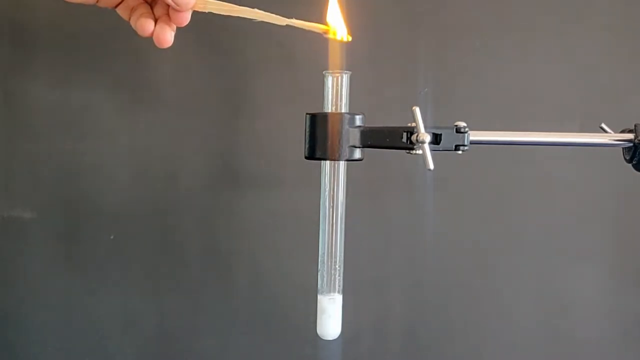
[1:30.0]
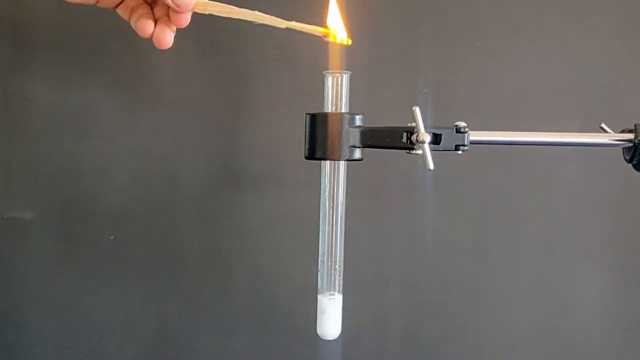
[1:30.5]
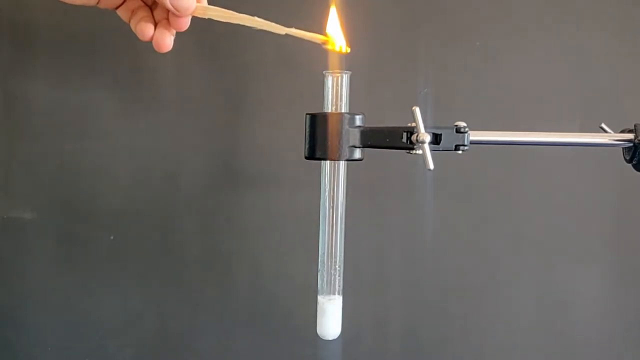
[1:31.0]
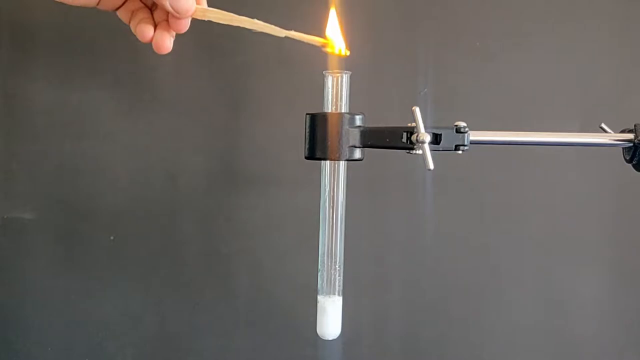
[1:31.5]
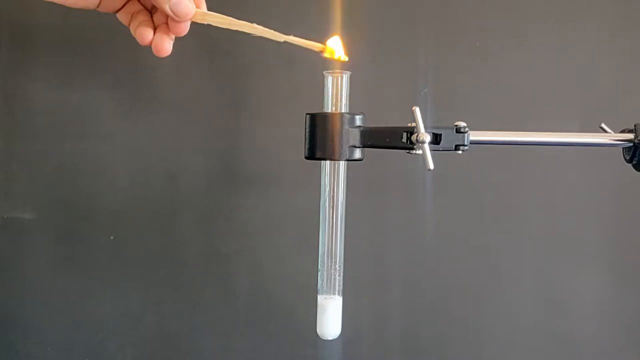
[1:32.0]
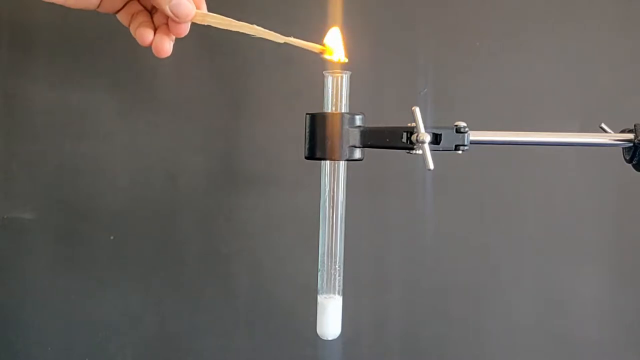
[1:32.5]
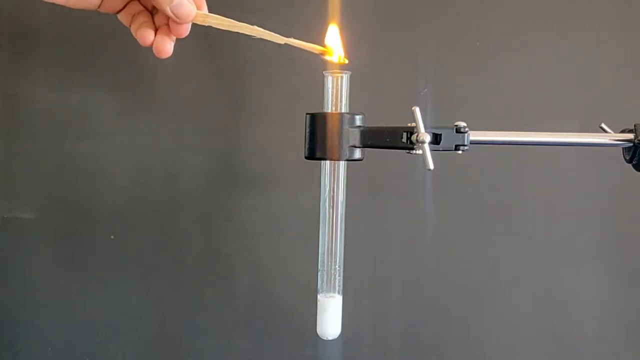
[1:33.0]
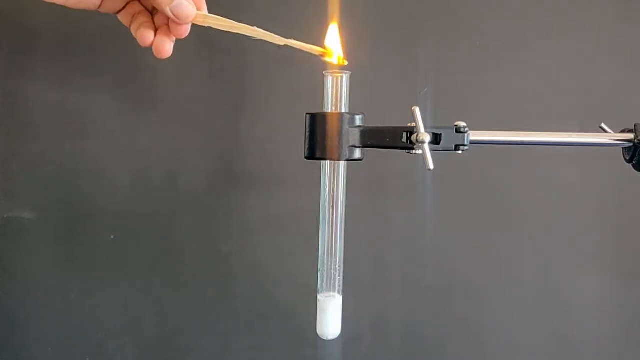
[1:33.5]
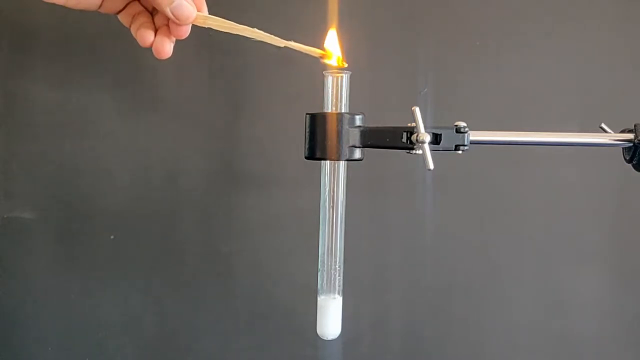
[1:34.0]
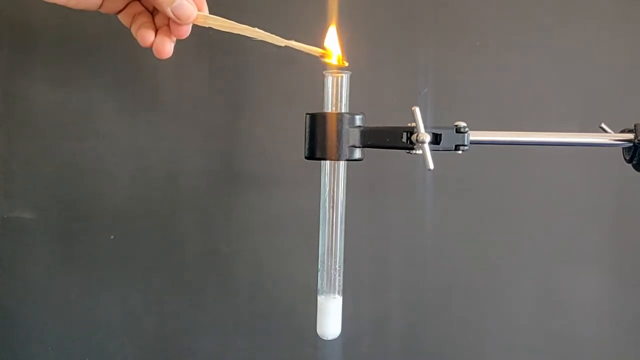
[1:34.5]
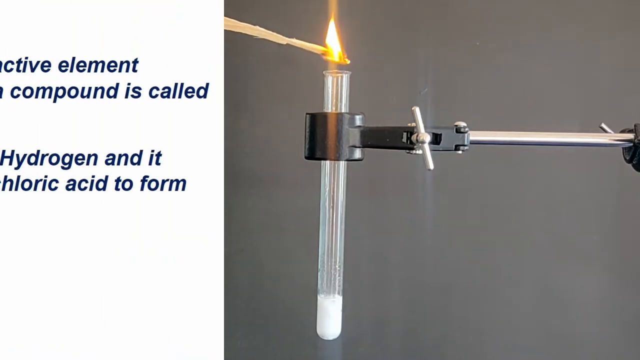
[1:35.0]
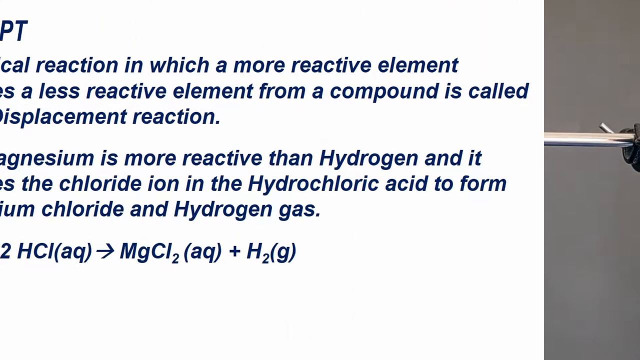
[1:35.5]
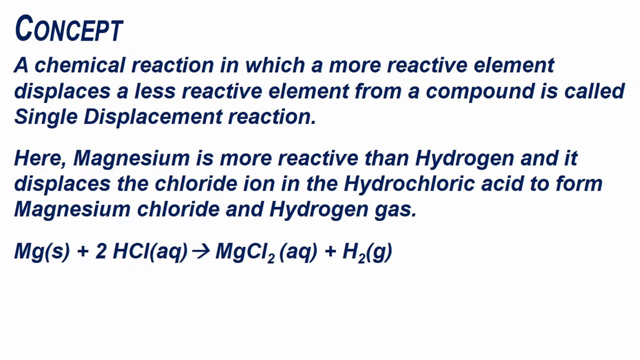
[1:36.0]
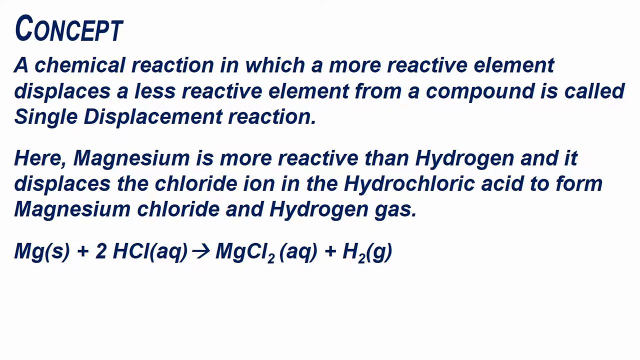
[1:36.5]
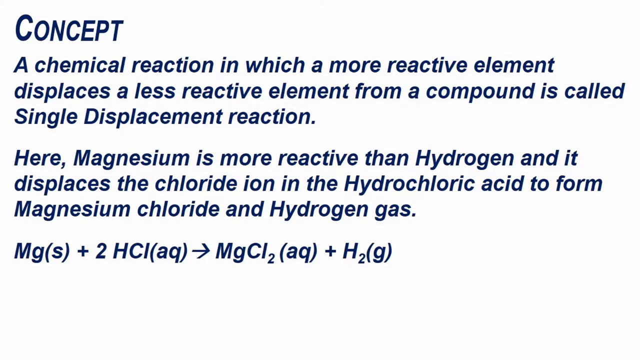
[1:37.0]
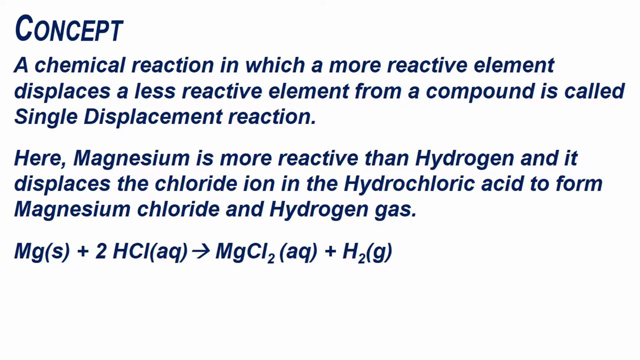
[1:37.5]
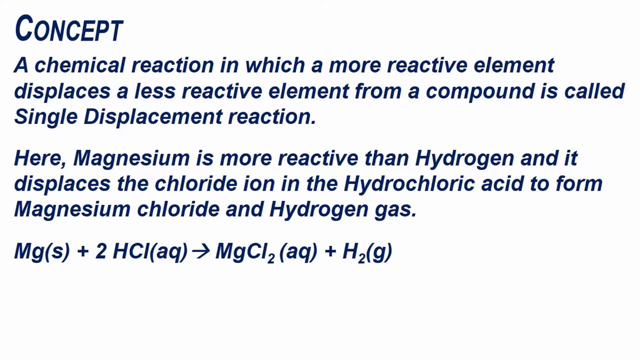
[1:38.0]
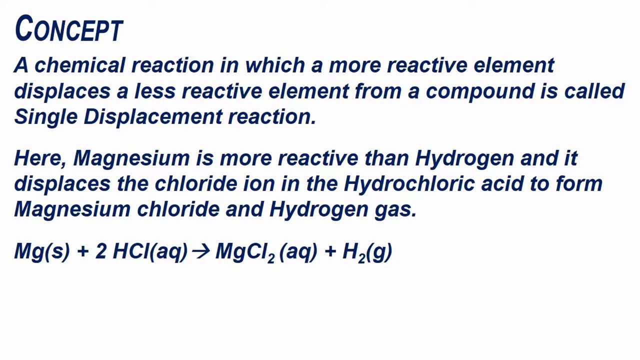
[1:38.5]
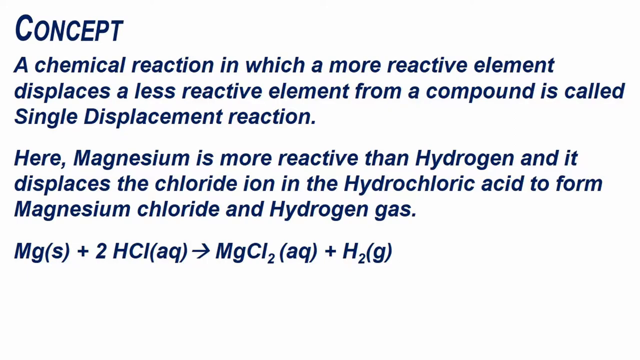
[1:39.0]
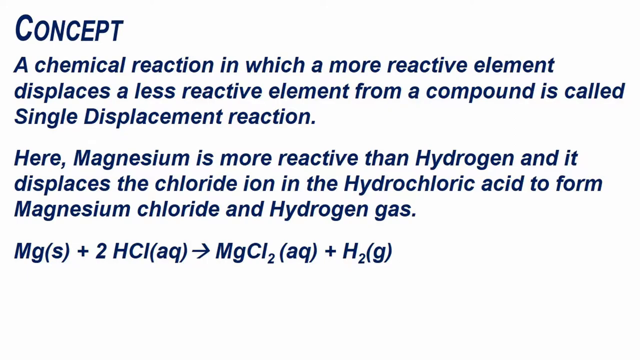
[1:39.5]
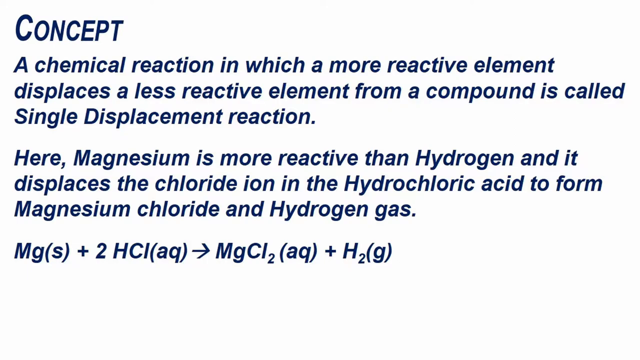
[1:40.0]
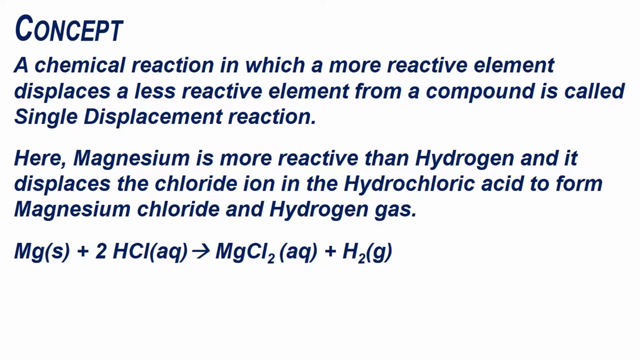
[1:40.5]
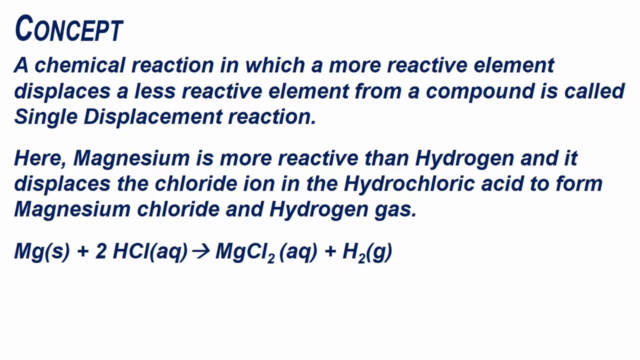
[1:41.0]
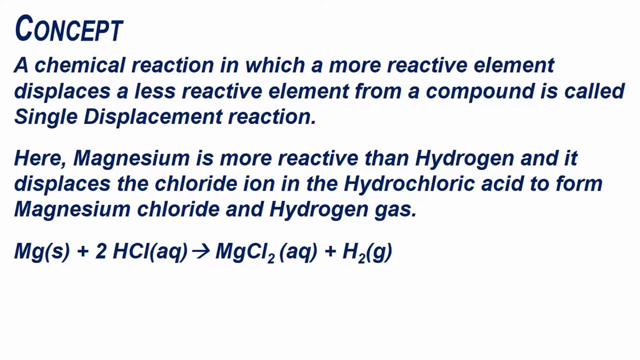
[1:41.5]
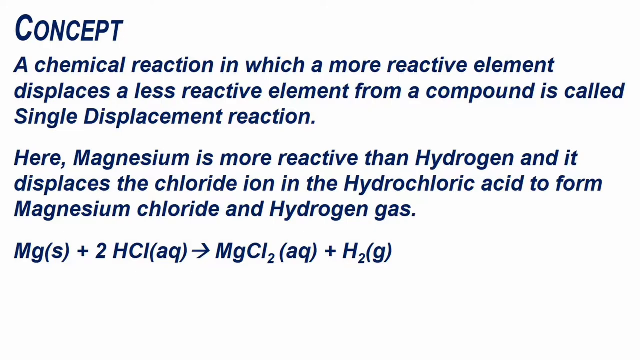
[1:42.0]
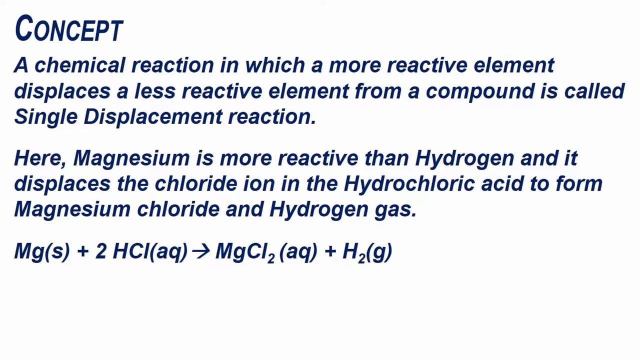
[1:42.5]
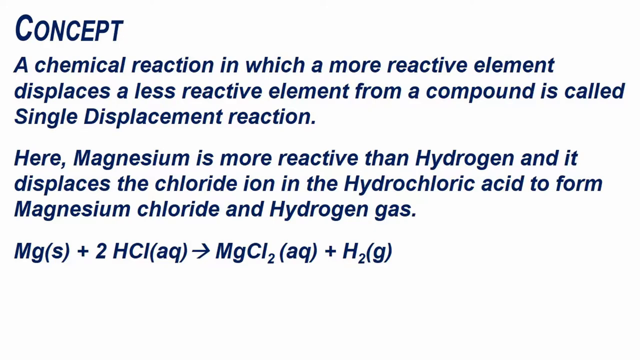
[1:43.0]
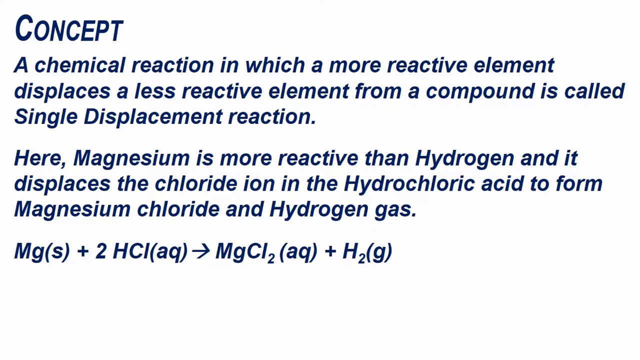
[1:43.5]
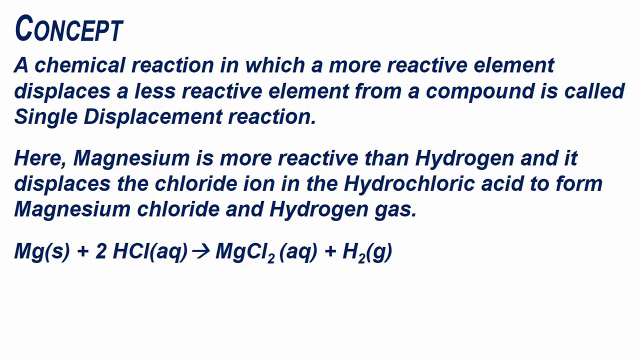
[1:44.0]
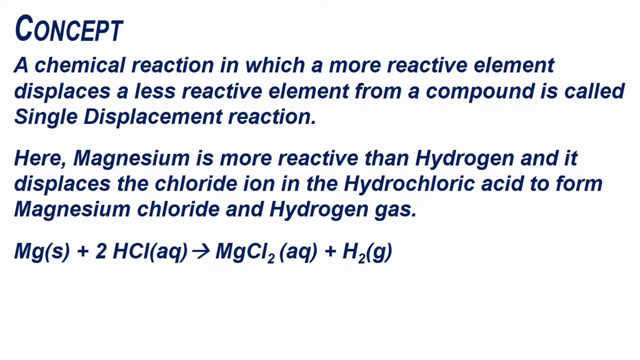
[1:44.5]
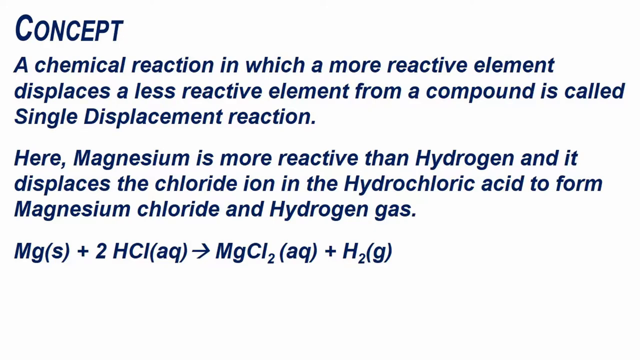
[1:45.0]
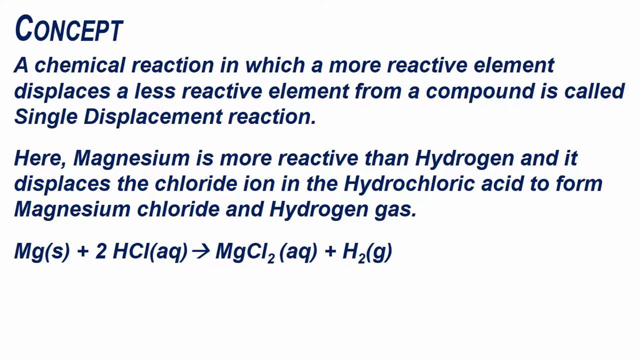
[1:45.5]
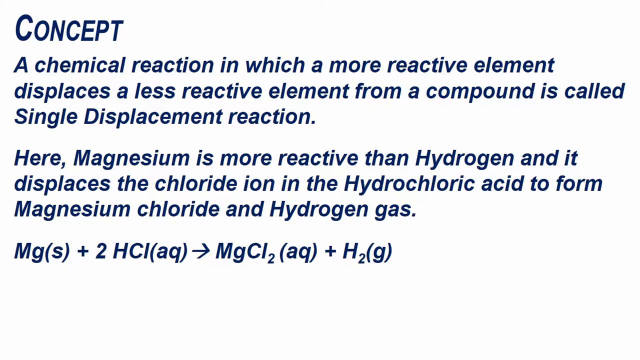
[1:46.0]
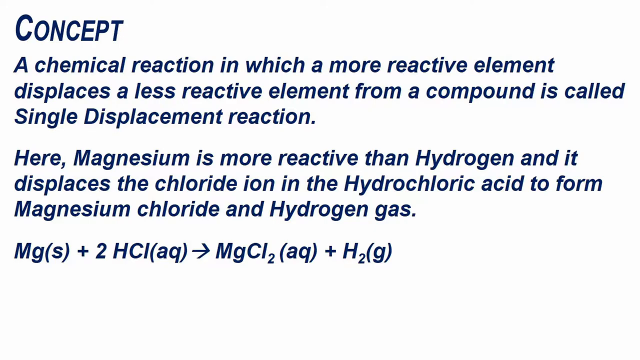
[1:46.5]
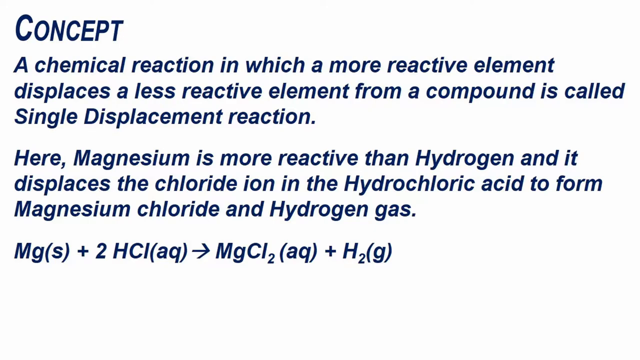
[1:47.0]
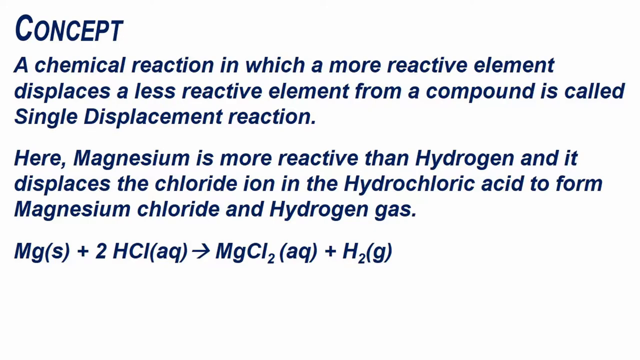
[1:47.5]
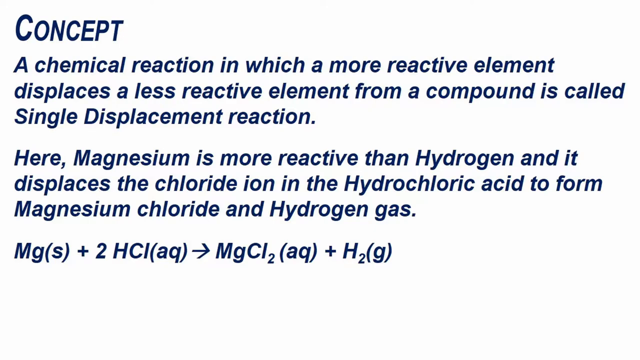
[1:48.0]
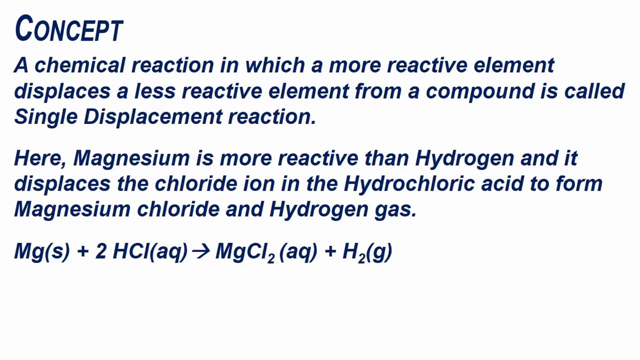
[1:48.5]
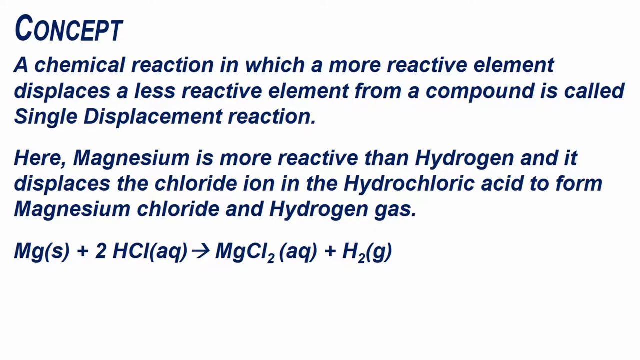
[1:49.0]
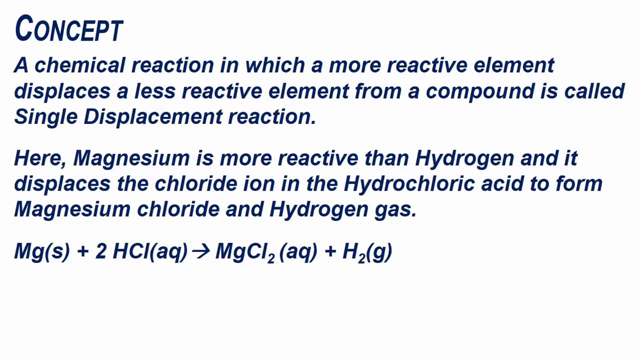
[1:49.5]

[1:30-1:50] A close-up shows a clear test tube held by the mechanical arm, with some liquid in its bottom, against a gray background. A person's hand at the left of the frame holds a lit piece of wood with a flame on it. The flame is brought to the top of the test tube, and a puff of fire is visible in slow motion. The video transitions to a white background with blue text reading "concept, a chemical reaction in which a more reactive element displaces a less reactive element from a compound is called single displacement reaction. Here, magnesium is more reactive than hydrogen, and it displaces the chloride ion in the hydrochloric acid to form magnesium chloride and hydrogen gas," with the chemical equation at the bottom.